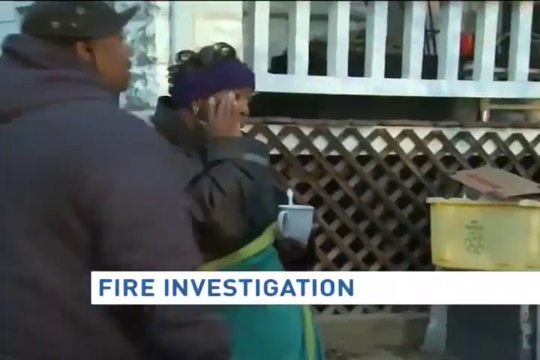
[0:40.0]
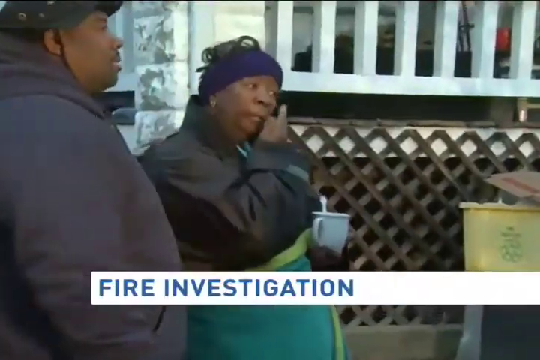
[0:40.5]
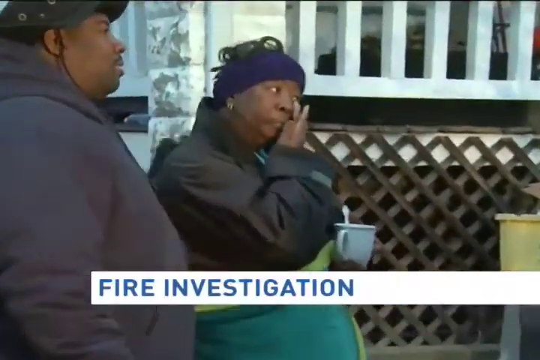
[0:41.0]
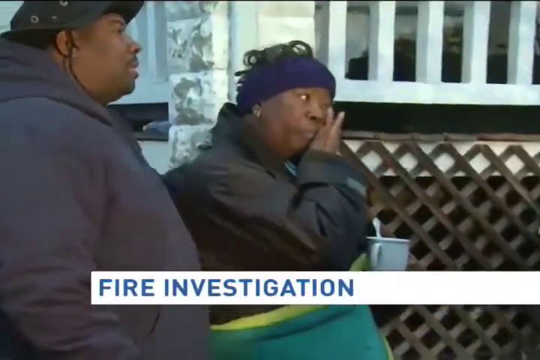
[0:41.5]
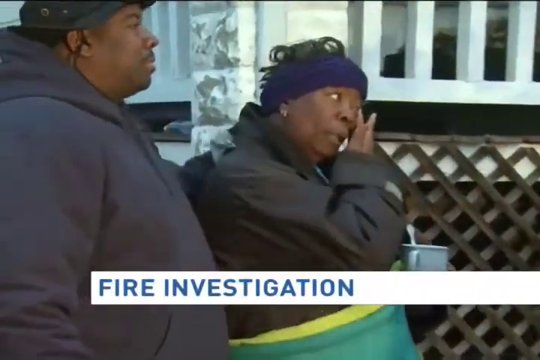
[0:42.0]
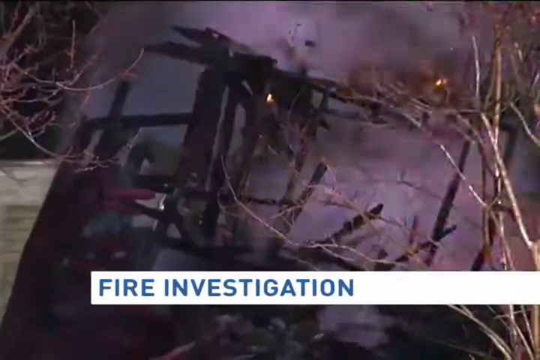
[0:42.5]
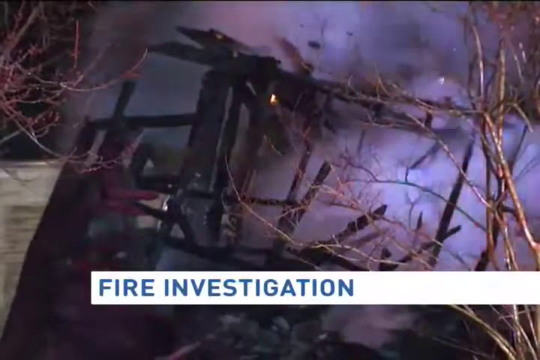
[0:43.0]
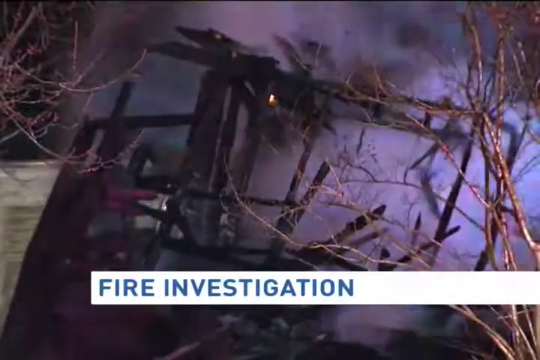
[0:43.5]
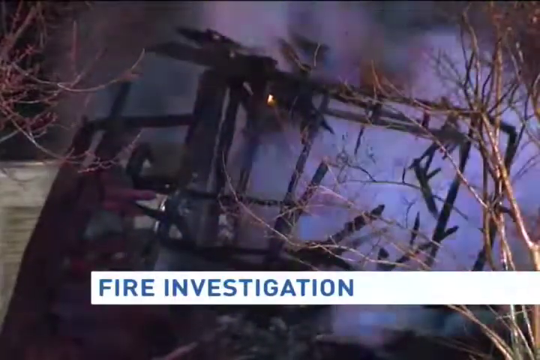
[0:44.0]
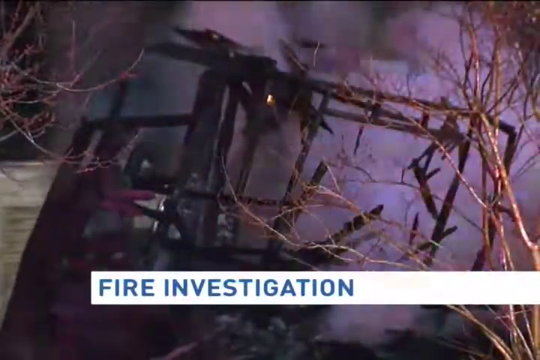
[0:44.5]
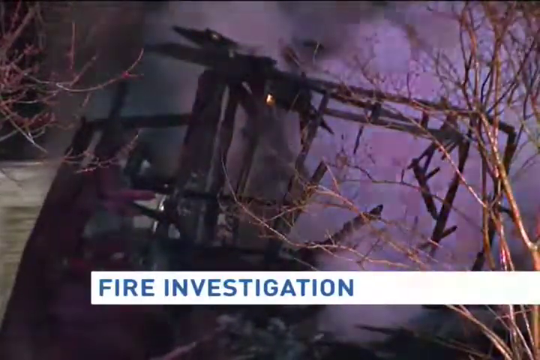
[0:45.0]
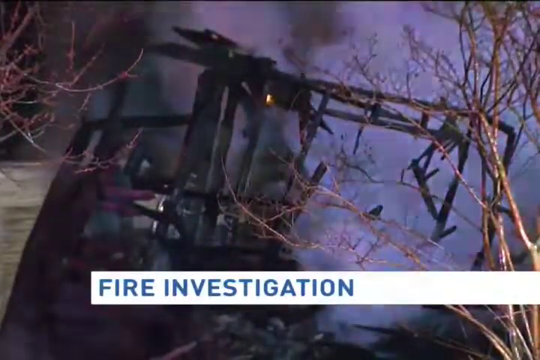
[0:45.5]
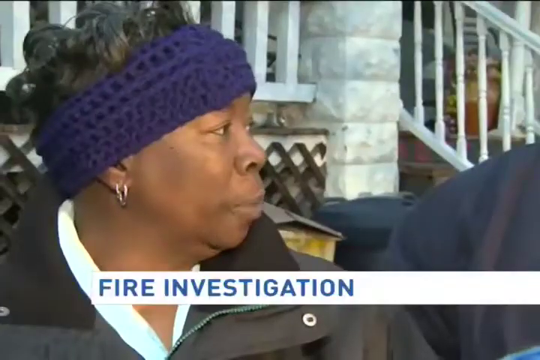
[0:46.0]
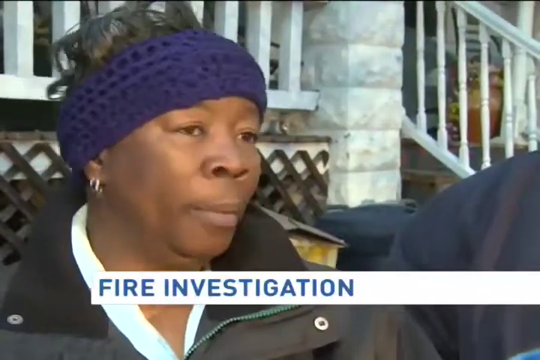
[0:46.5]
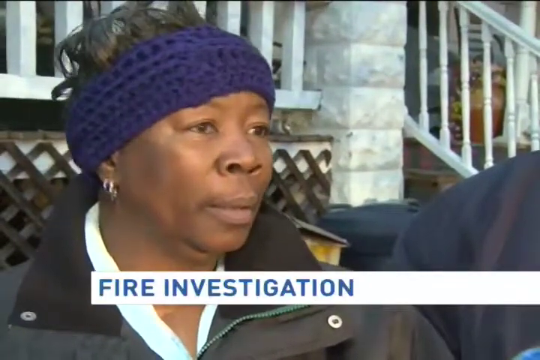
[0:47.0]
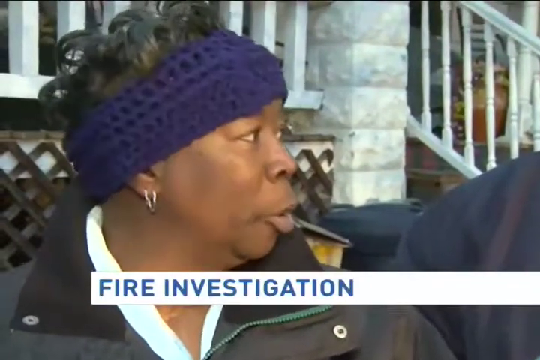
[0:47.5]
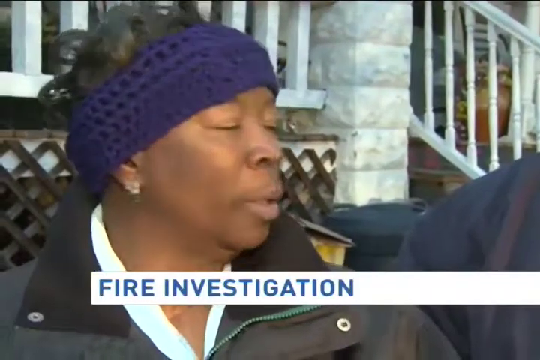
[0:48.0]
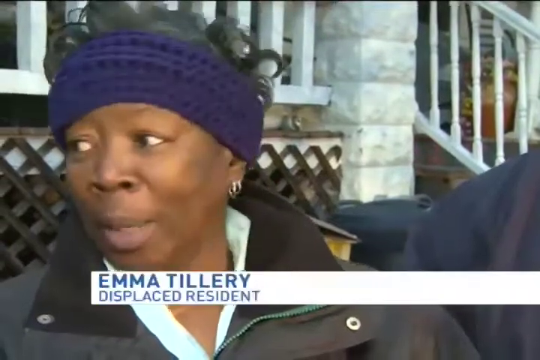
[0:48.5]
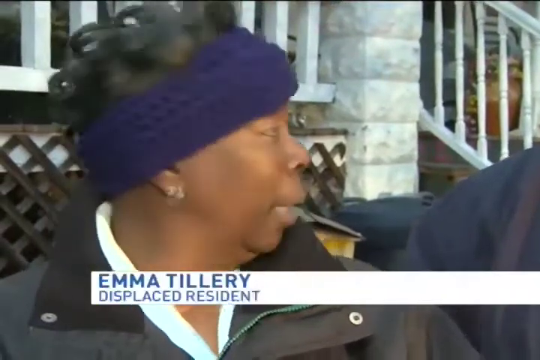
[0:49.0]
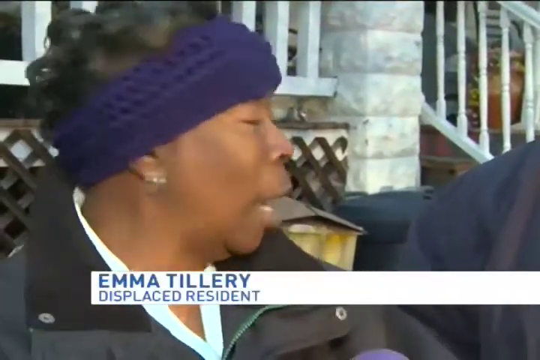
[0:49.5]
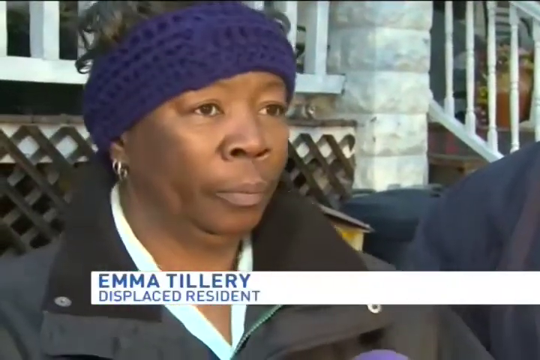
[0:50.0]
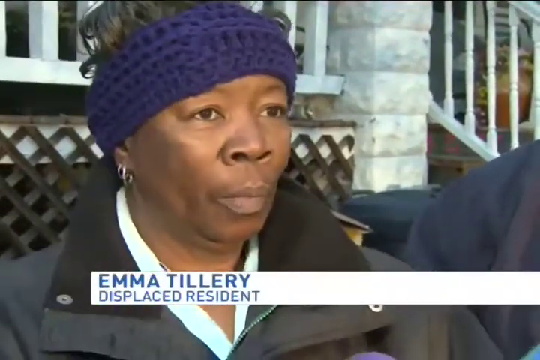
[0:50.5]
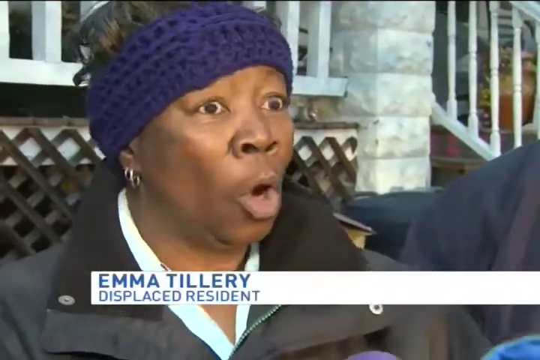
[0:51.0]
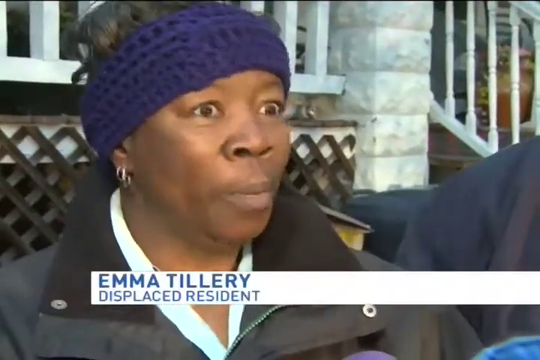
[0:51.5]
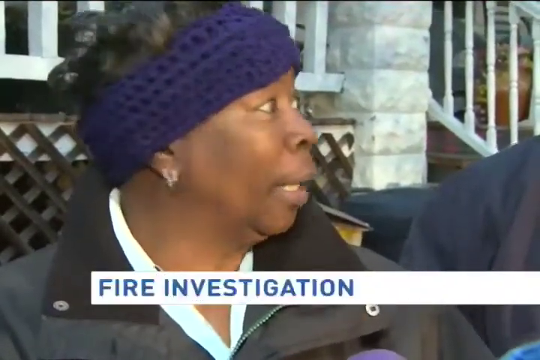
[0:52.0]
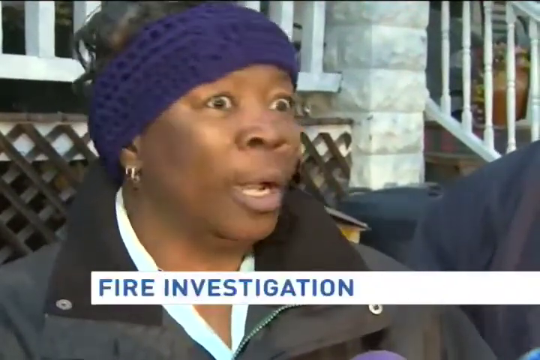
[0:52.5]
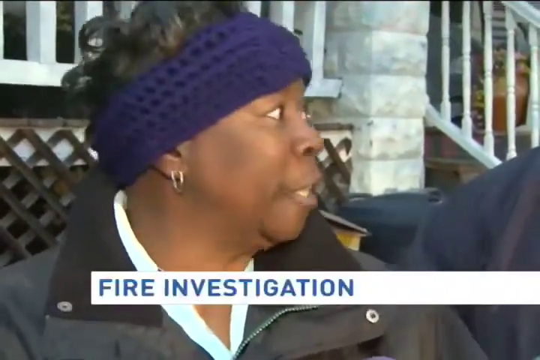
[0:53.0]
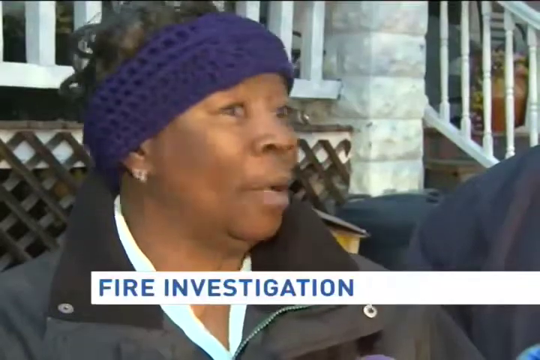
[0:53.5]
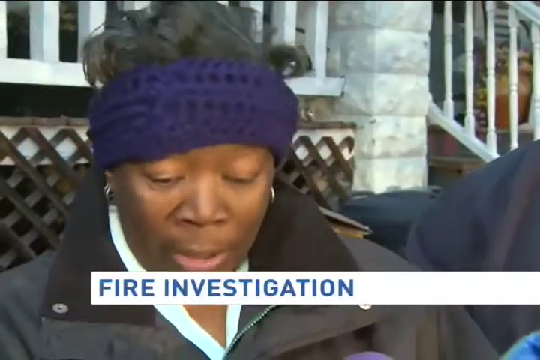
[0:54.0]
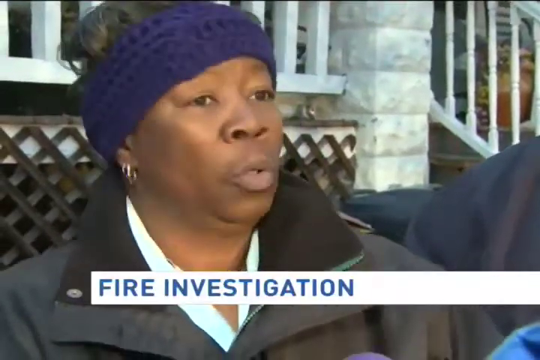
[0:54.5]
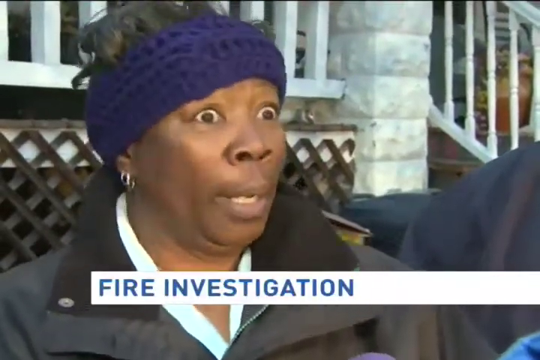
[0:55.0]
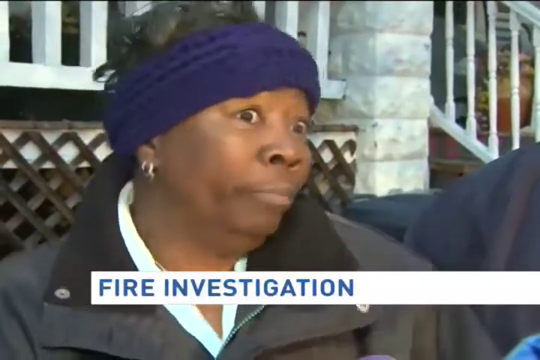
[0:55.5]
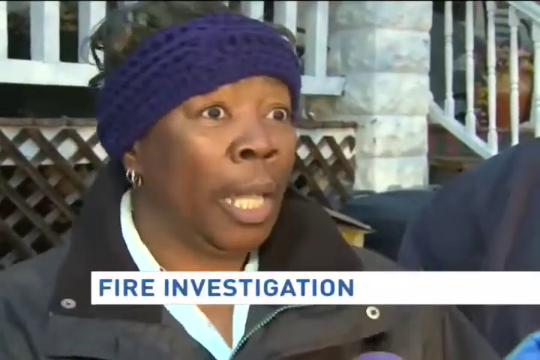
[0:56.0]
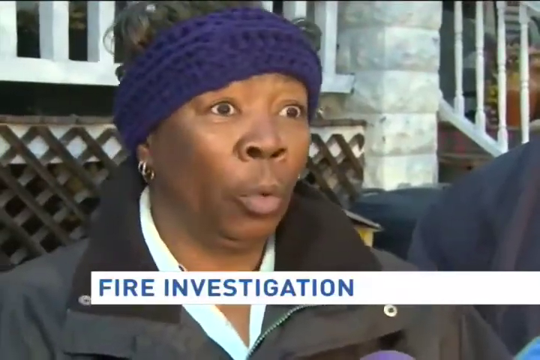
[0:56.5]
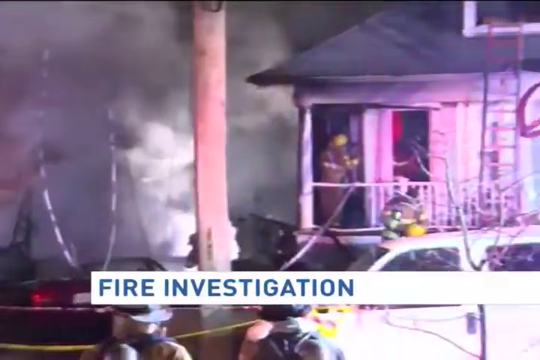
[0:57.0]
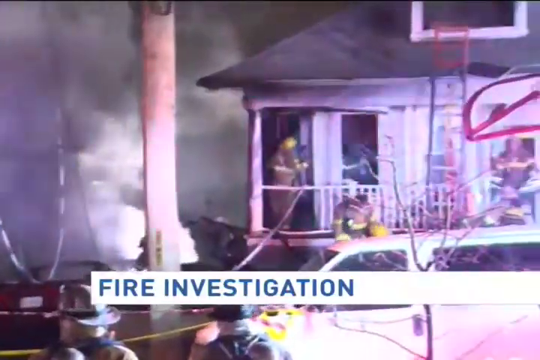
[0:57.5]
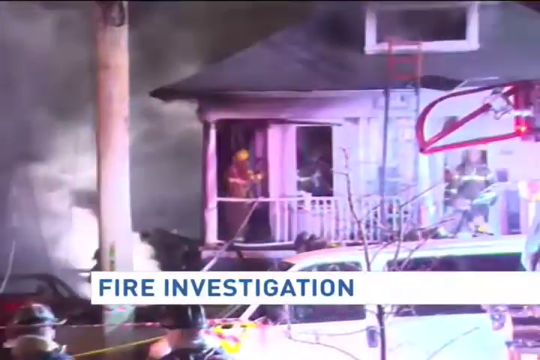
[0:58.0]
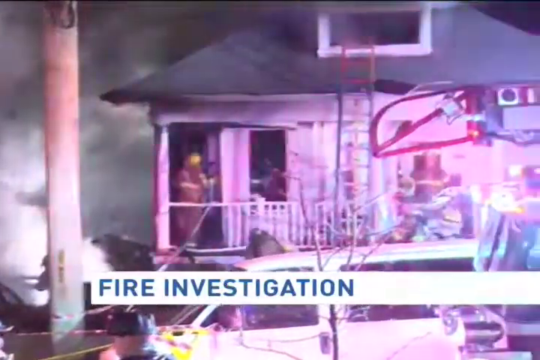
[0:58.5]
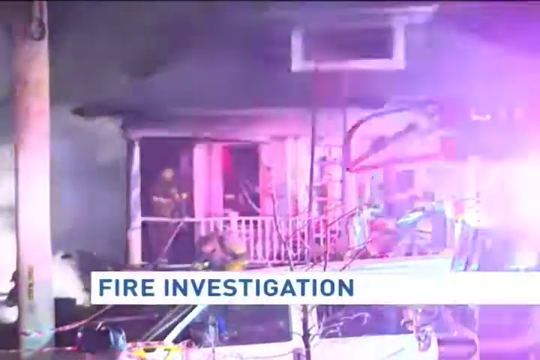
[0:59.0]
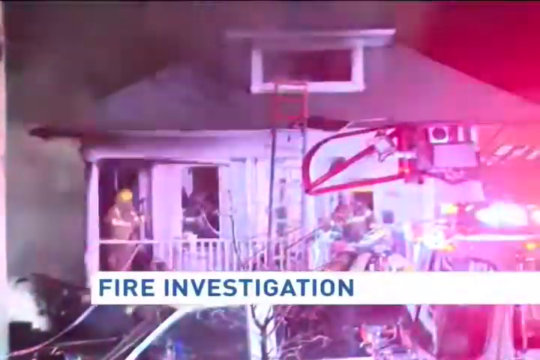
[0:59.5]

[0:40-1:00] People stand in front of their house wearing jackets, and a woman holding a mug in her left hand is crying and wiping away tears, with "fire investigation" at the bottom of the screen. It cuts to another shot of a building on fire, with smoke moving away from it. Then a woman wearing some kind of warm covering on her head is interviewed, talking to the camera, with the caption "Emma Dillery a displaced resident" at the bottom of the screen. The staircase to her house is in the background, and "fire investigation" appears at the bottom again. Another shot shows firefighters stopping a fire in a house; there is a large ladder on the top of the building, and they all exit the building with flames all around the house.